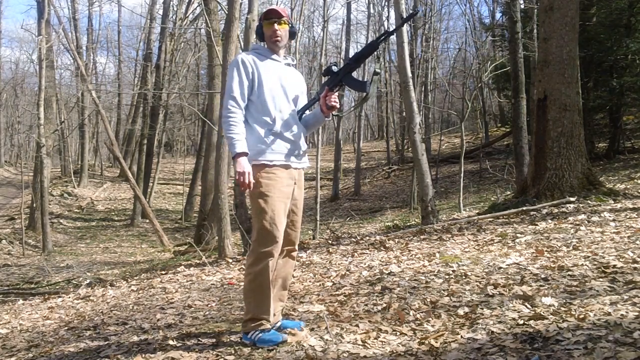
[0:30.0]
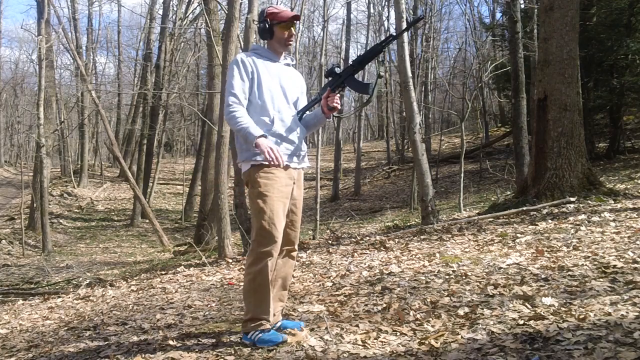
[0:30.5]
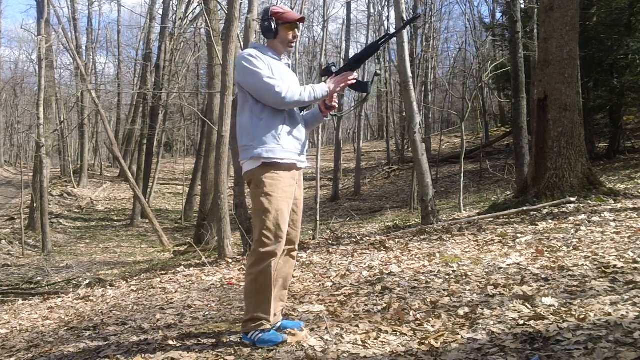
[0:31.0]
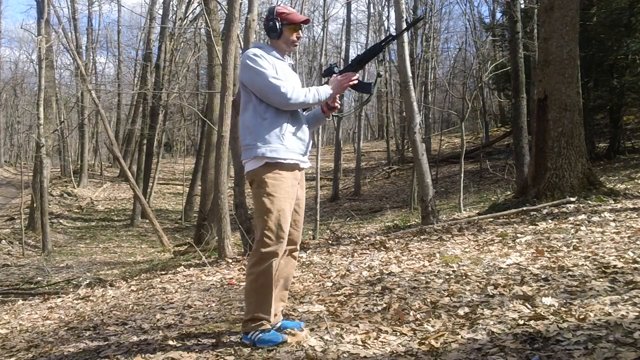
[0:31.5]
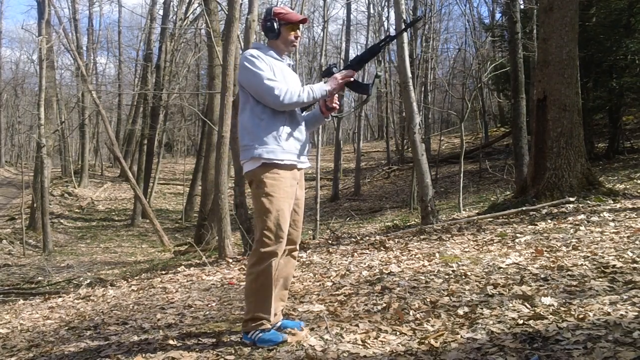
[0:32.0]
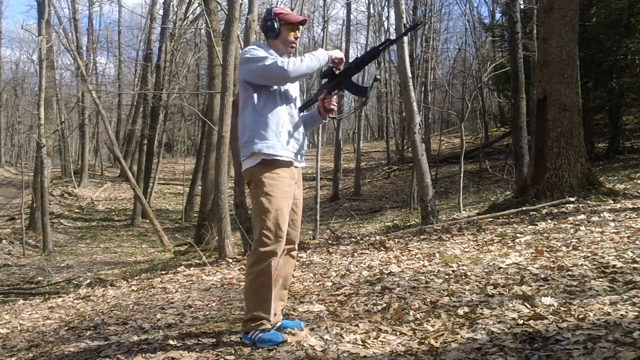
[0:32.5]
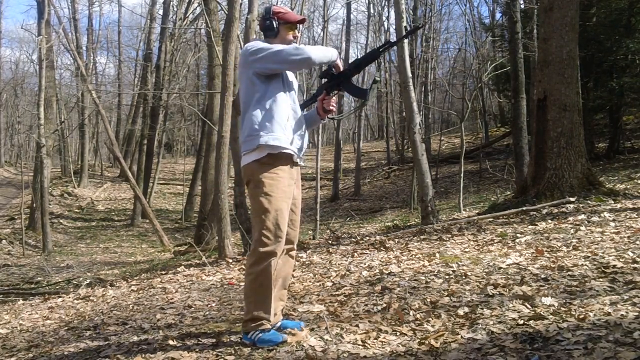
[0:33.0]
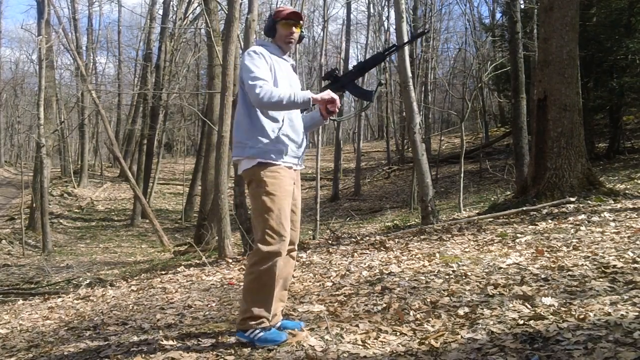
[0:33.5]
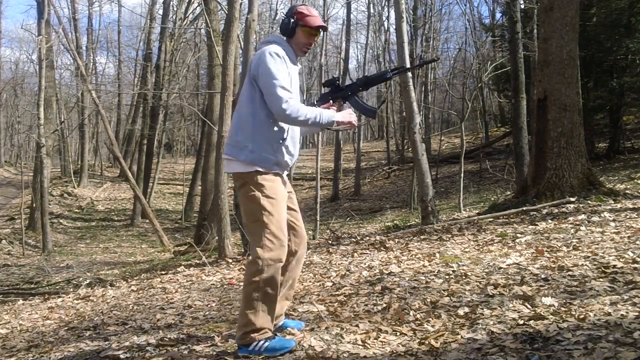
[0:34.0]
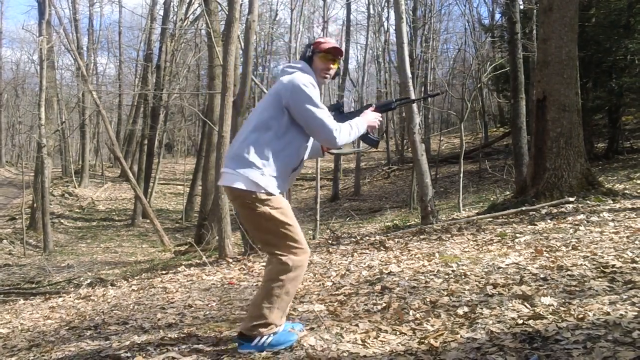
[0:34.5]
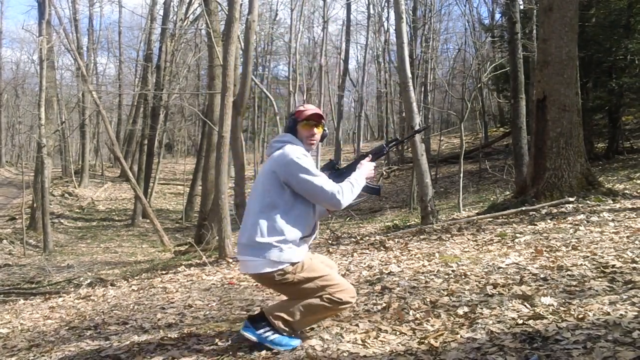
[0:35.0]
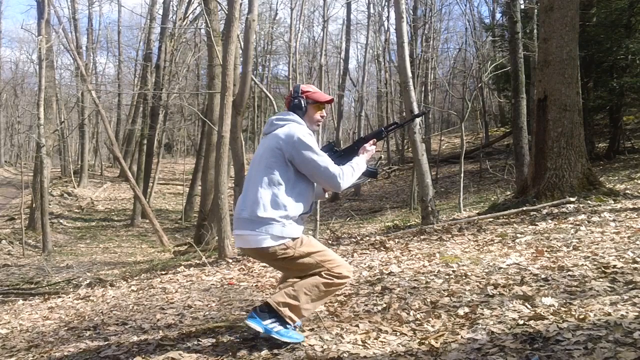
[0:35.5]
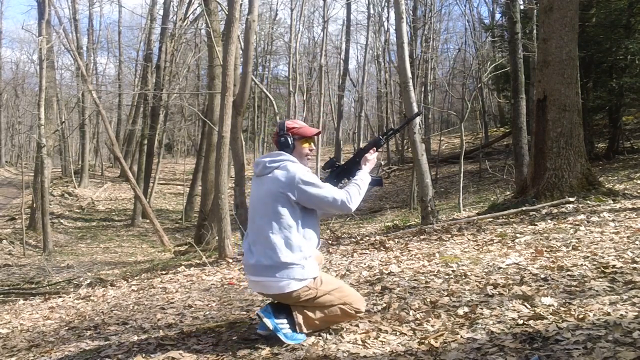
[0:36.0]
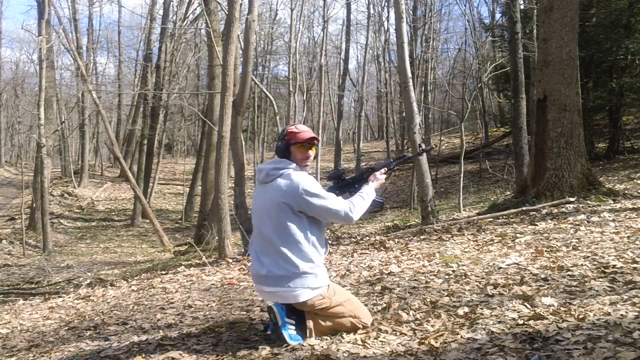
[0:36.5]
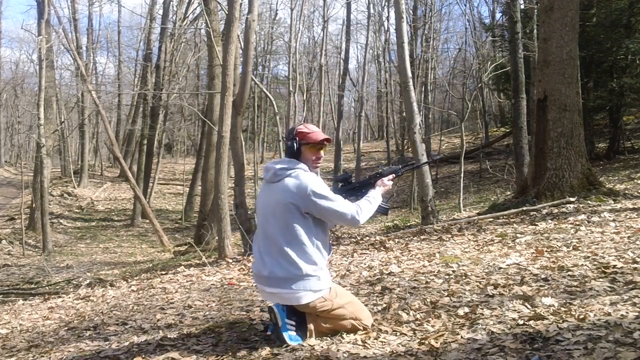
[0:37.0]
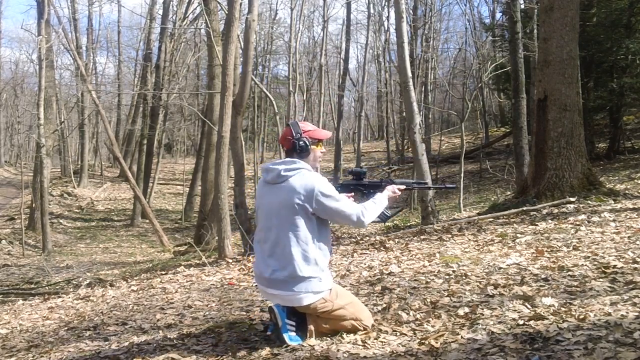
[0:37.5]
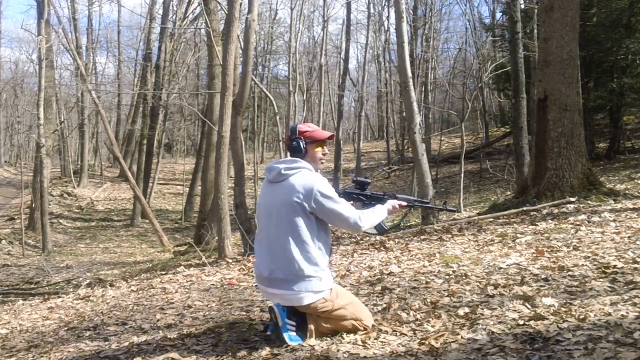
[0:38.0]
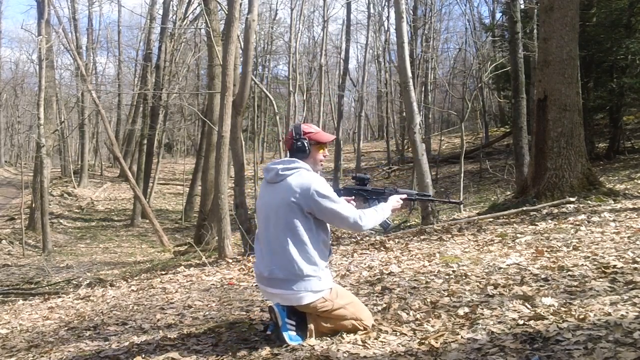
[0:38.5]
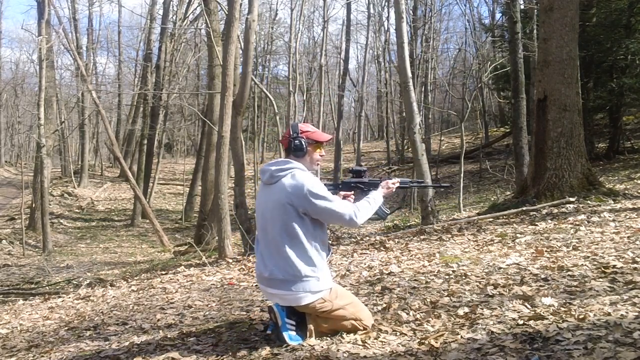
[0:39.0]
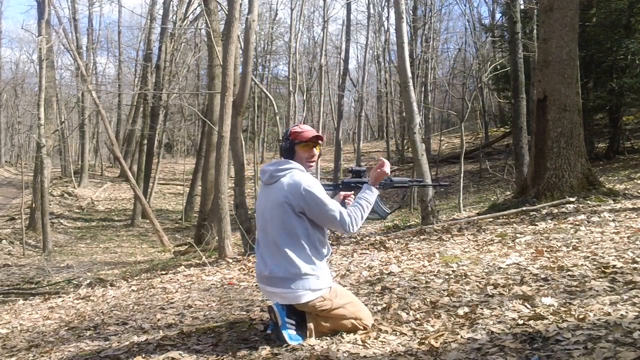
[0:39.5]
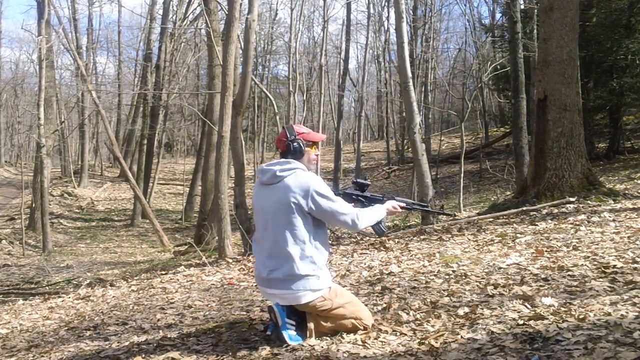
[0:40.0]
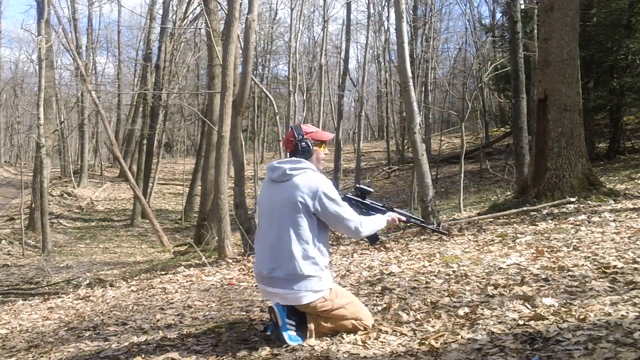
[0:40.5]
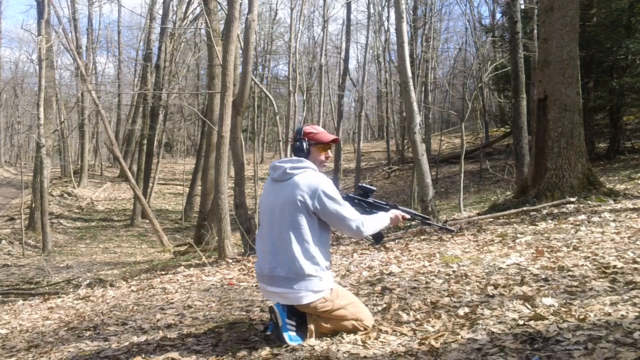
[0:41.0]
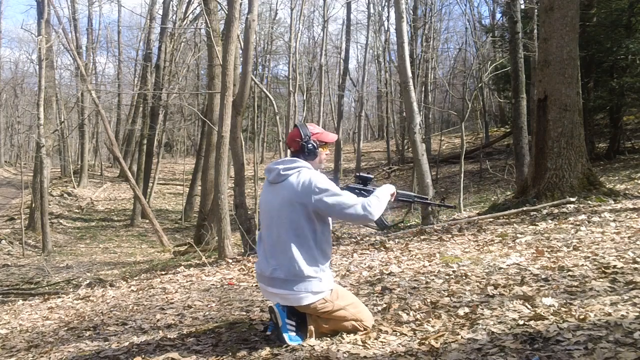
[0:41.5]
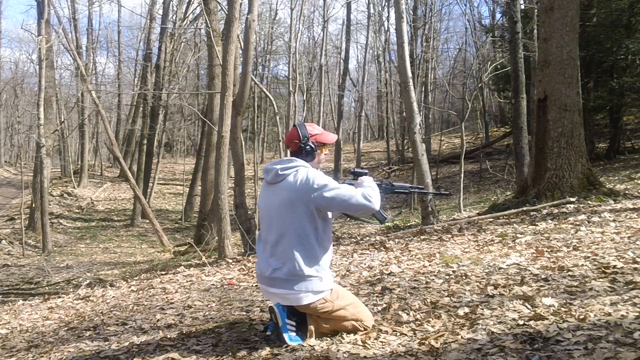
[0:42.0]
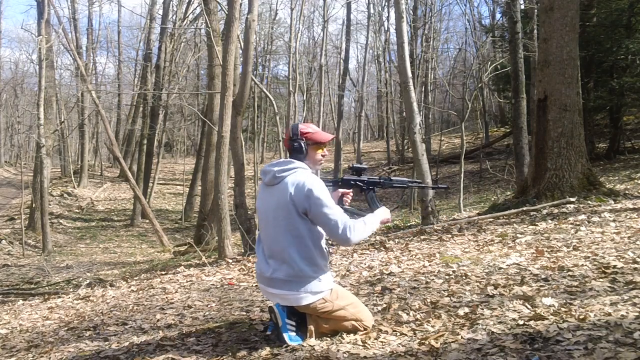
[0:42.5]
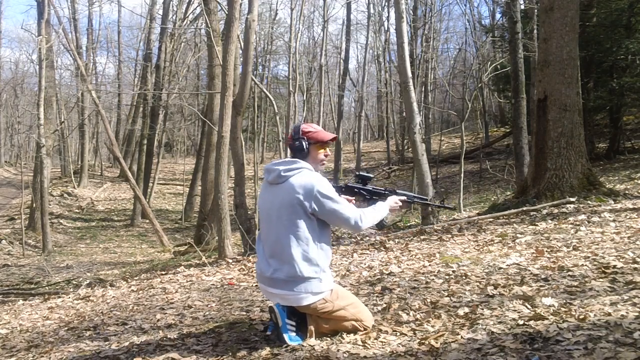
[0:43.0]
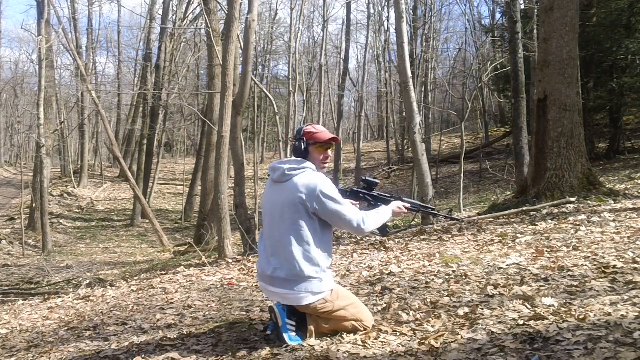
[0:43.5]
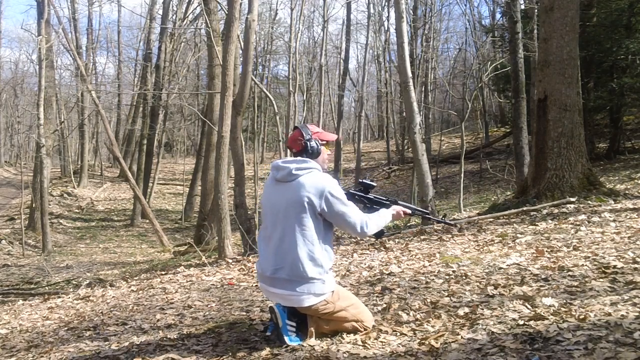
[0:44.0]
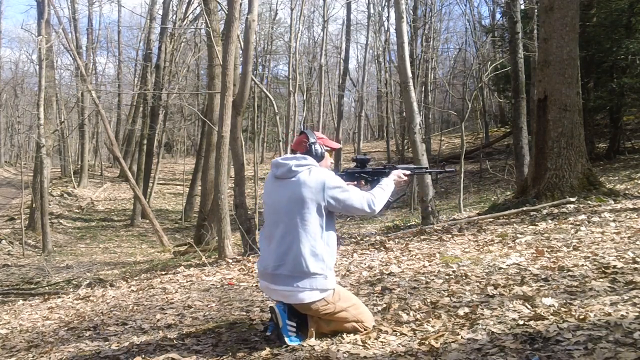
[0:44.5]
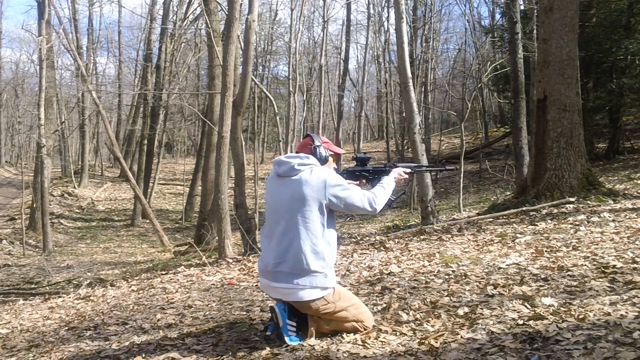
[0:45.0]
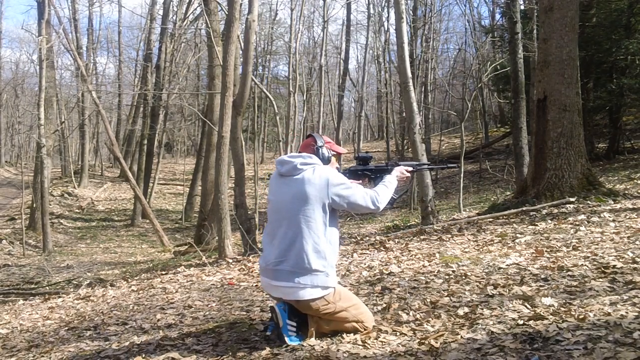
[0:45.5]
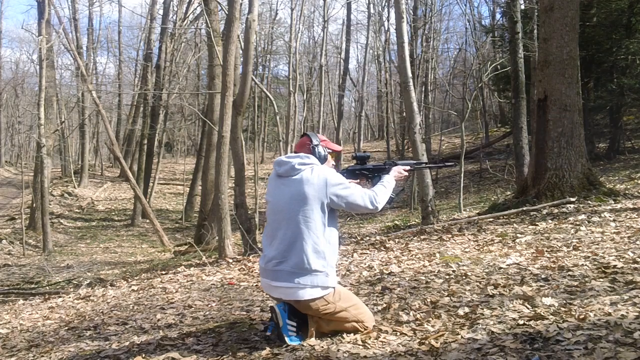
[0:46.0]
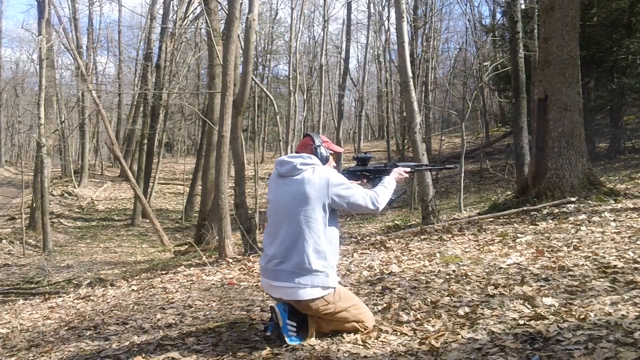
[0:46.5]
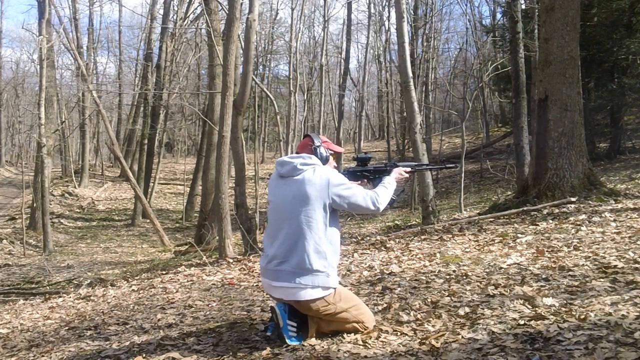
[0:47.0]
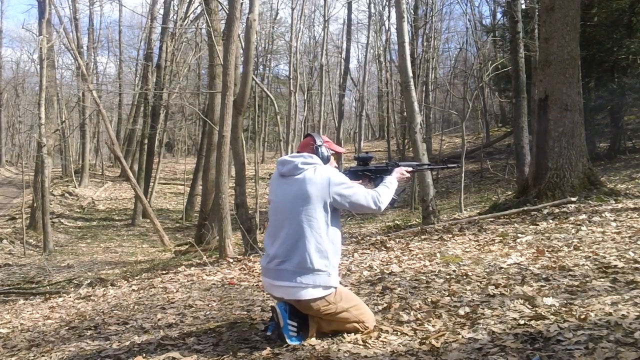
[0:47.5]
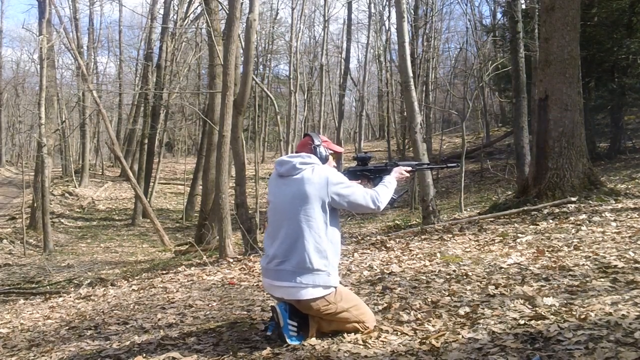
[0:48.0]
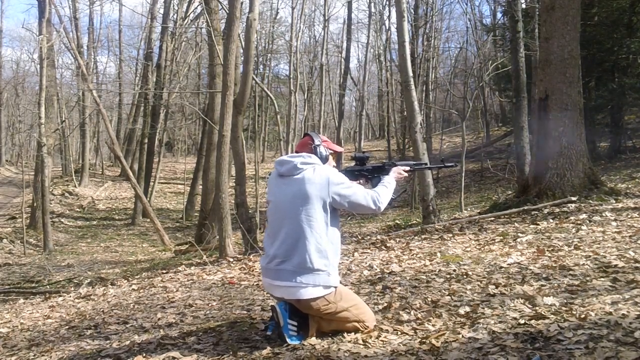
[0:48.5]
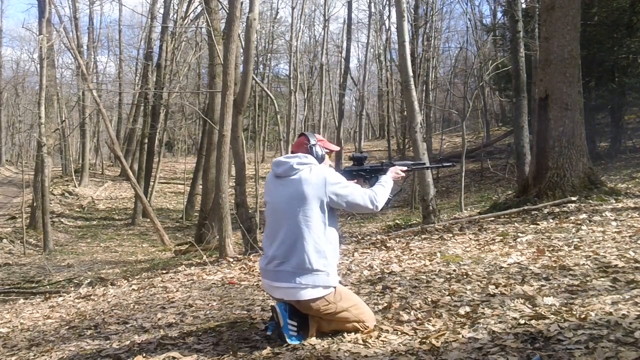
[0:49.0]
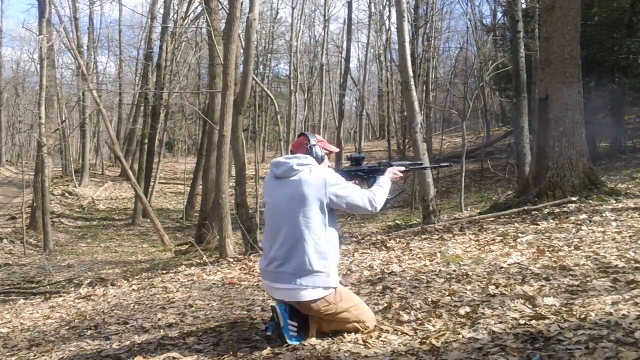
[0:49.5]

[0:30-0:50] The man wears khaki pants, blue sneakers and a white t-shirt underneath. He bends down, looks the other way and continues demonstrating how to hold the gun. He holds it with his left hand and gestures with his right hand to show how to carry it, pointing at the chamber where the bullets are kept. Bending down, he aims at something that cannot be seen and looks through the scope on the gun. He then fires more than 10 times. He is kneeling on the ground with no cover.